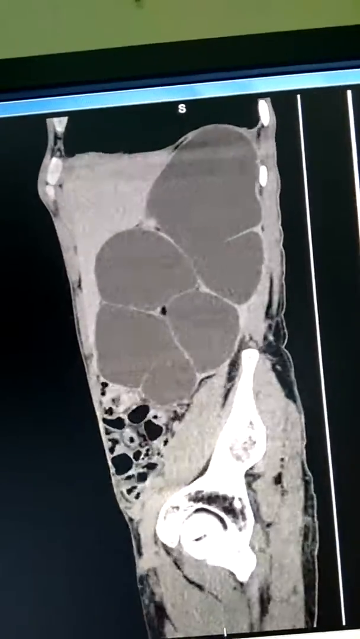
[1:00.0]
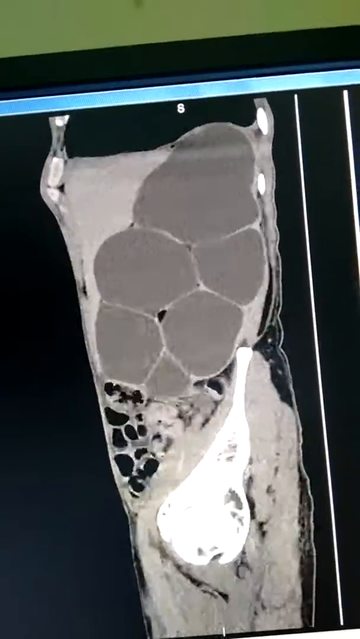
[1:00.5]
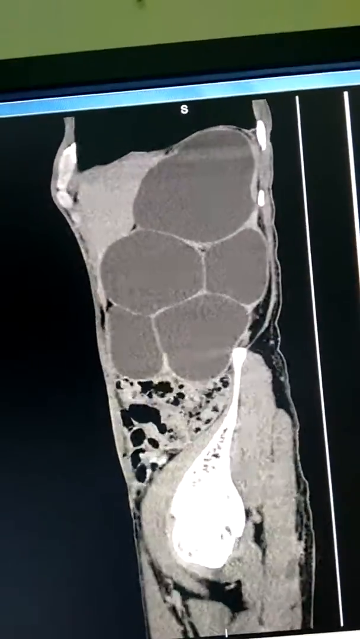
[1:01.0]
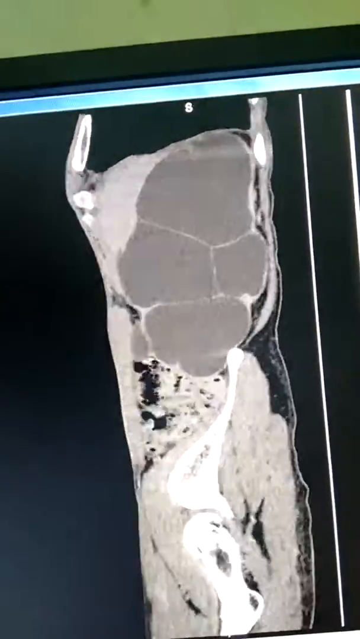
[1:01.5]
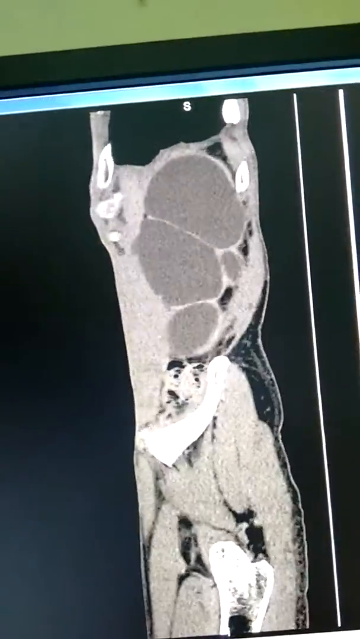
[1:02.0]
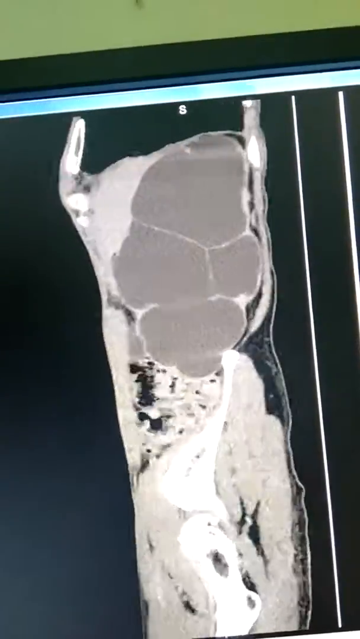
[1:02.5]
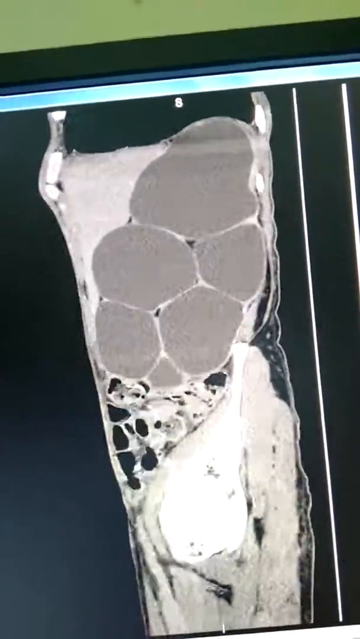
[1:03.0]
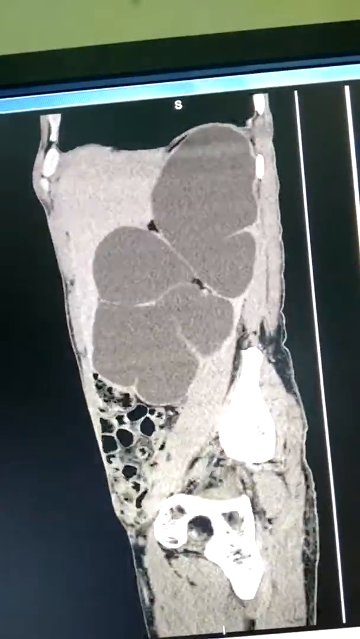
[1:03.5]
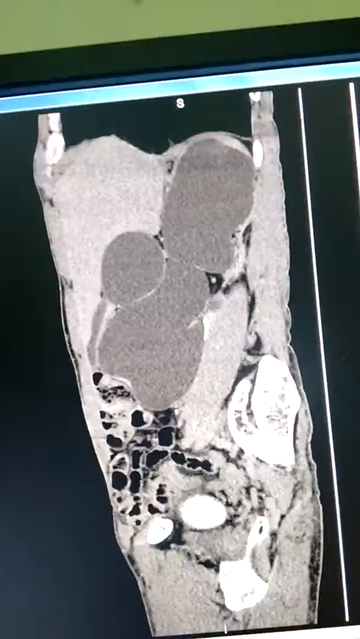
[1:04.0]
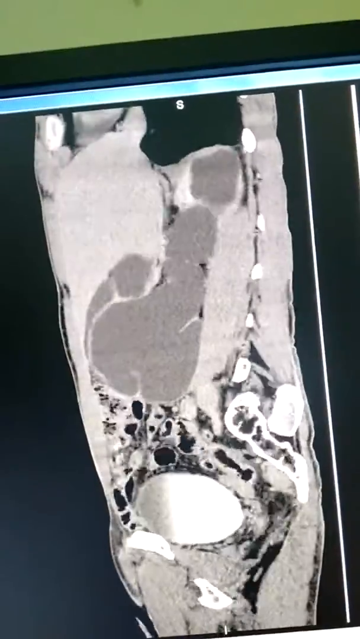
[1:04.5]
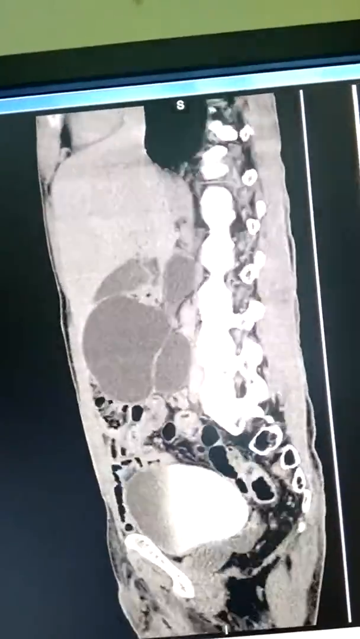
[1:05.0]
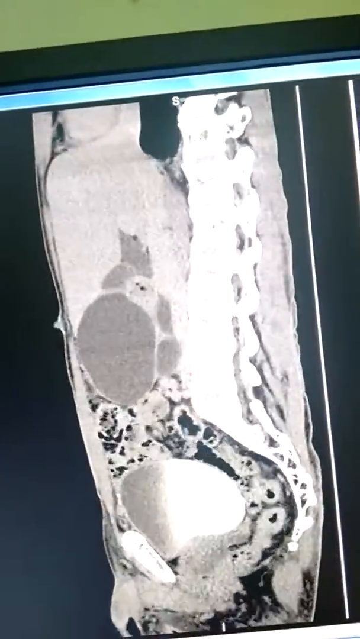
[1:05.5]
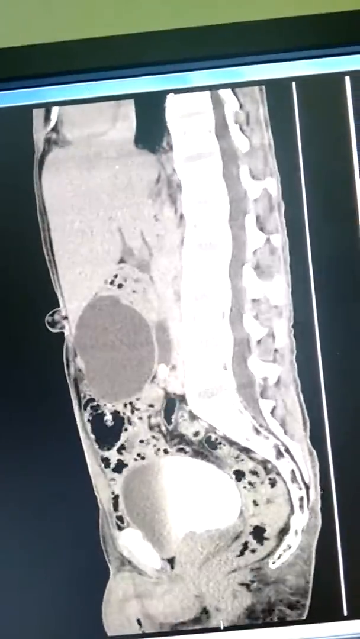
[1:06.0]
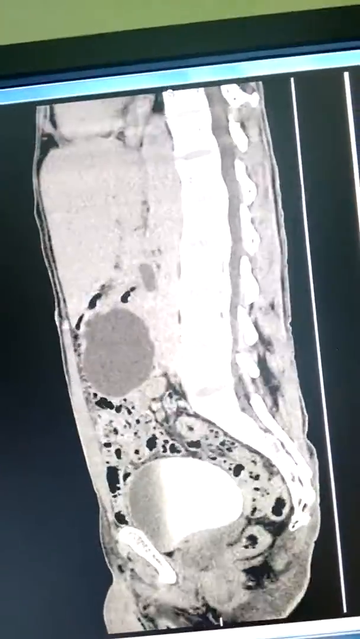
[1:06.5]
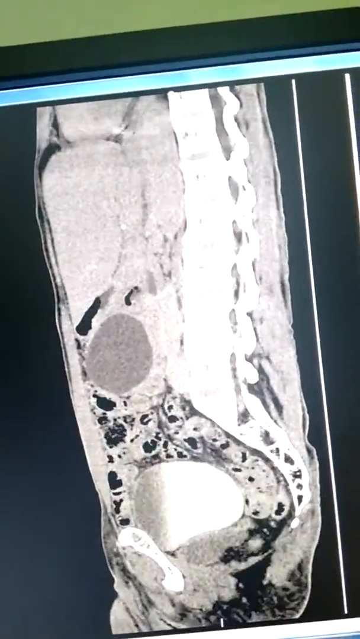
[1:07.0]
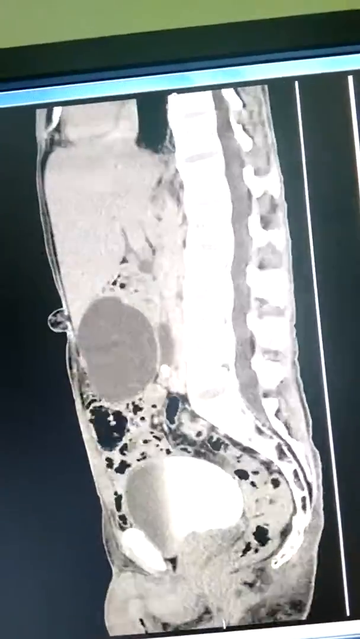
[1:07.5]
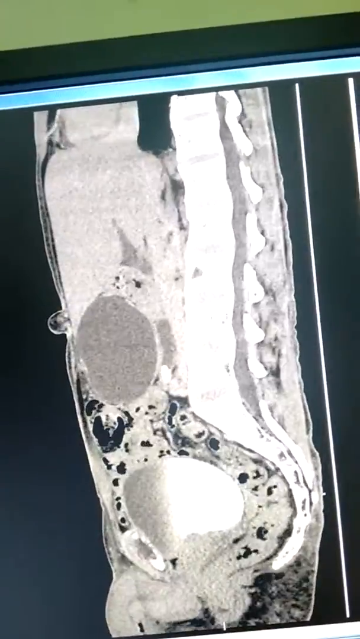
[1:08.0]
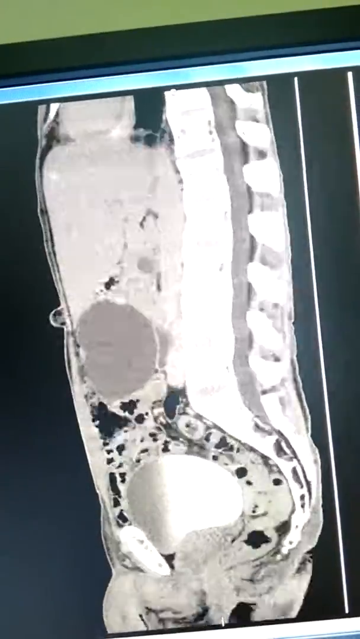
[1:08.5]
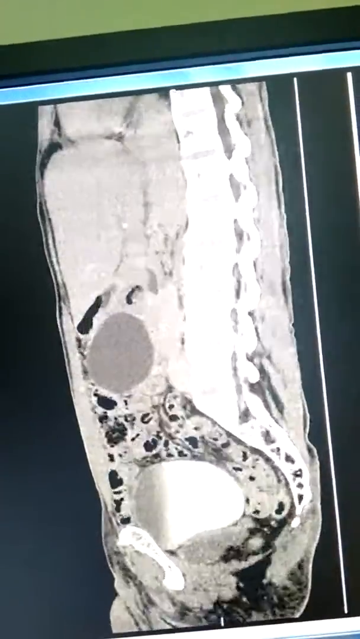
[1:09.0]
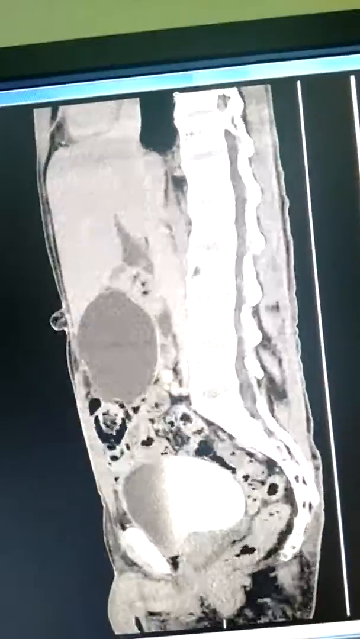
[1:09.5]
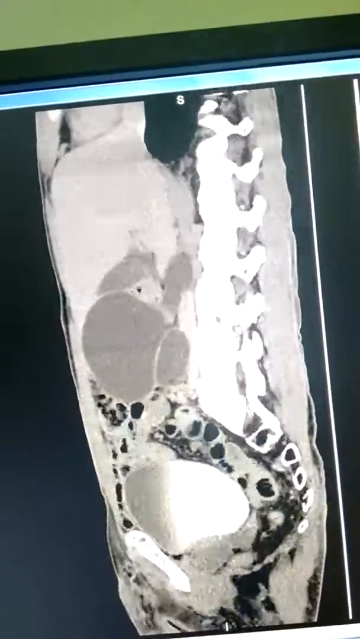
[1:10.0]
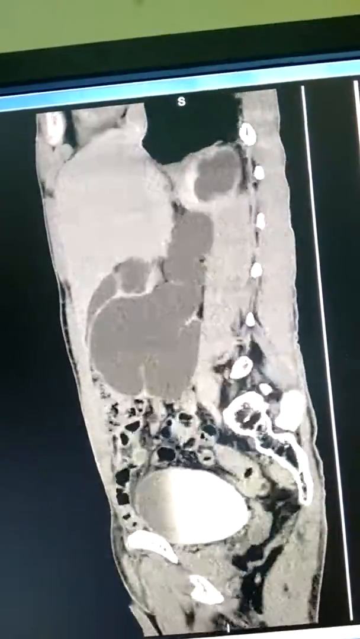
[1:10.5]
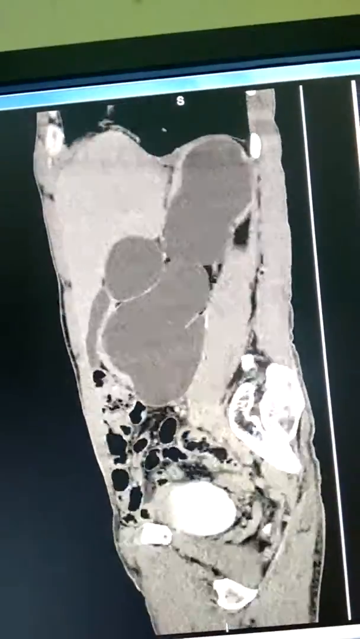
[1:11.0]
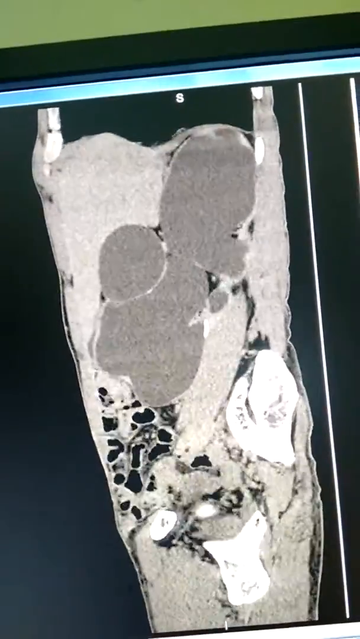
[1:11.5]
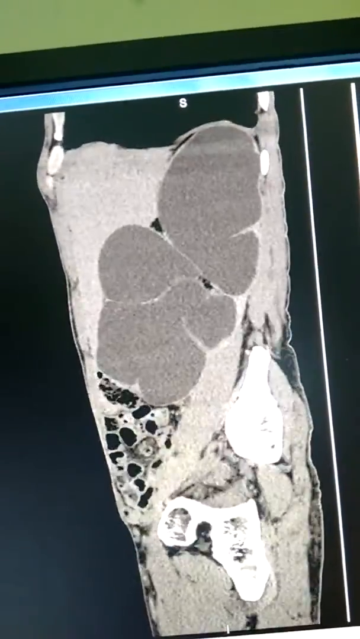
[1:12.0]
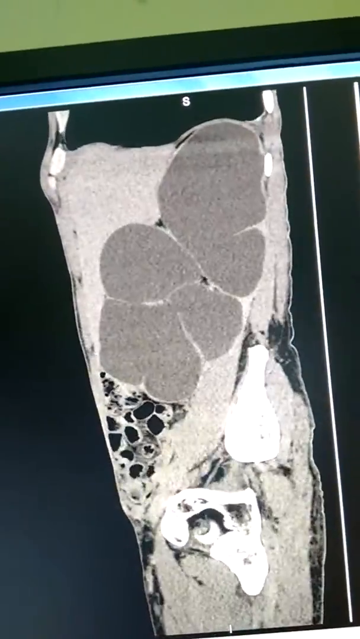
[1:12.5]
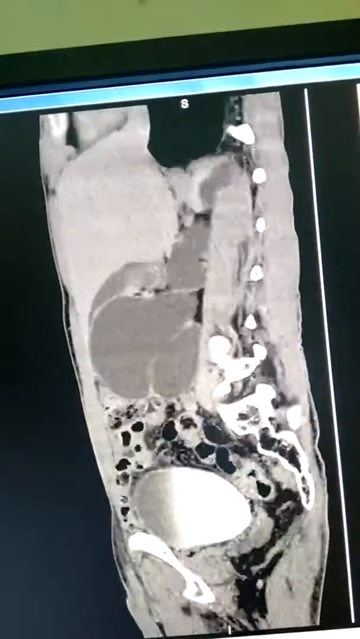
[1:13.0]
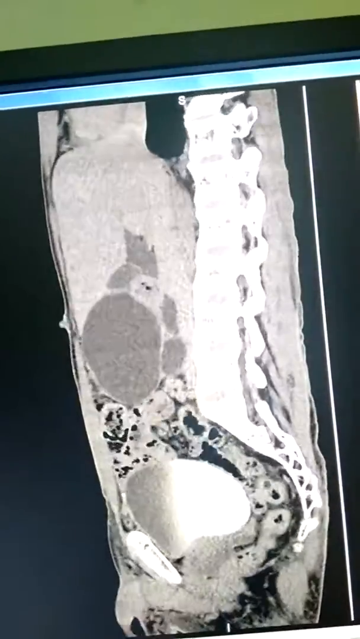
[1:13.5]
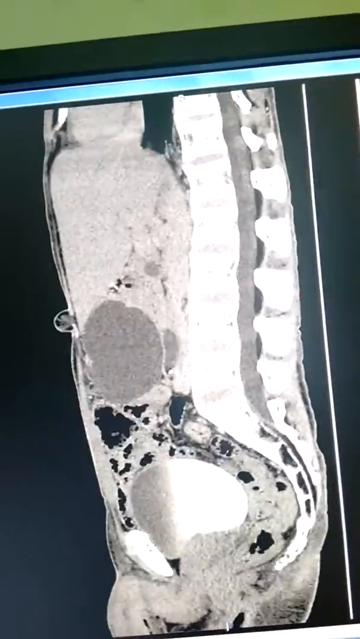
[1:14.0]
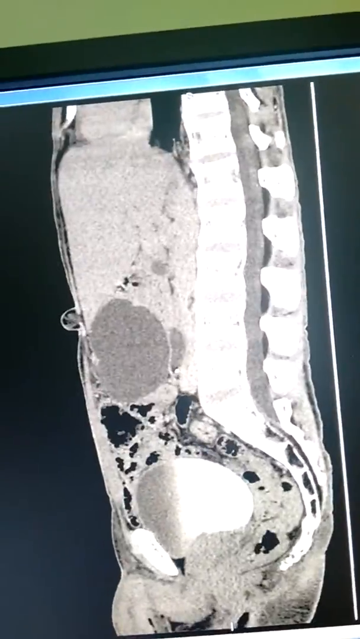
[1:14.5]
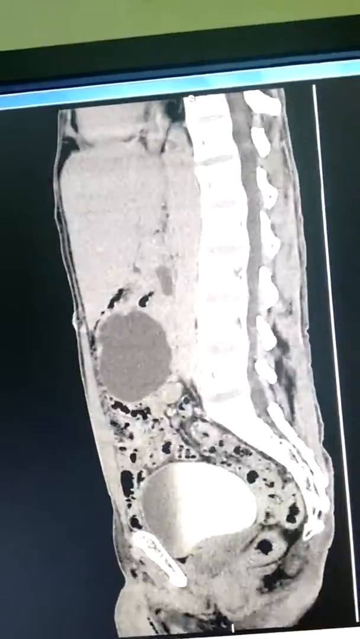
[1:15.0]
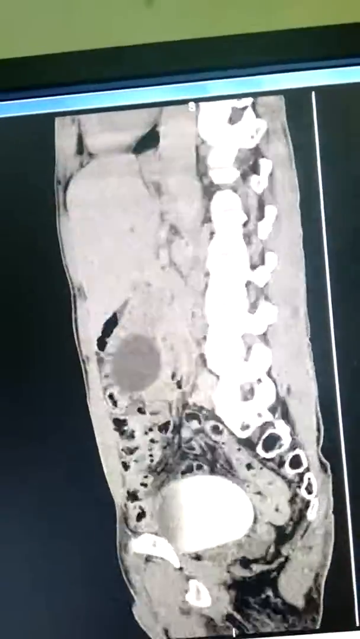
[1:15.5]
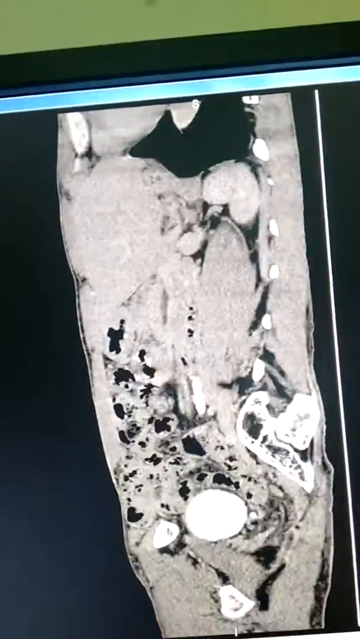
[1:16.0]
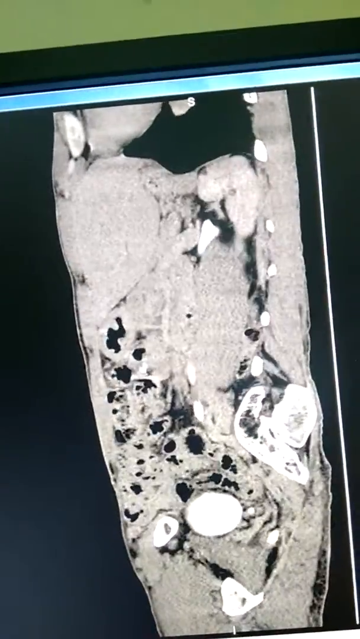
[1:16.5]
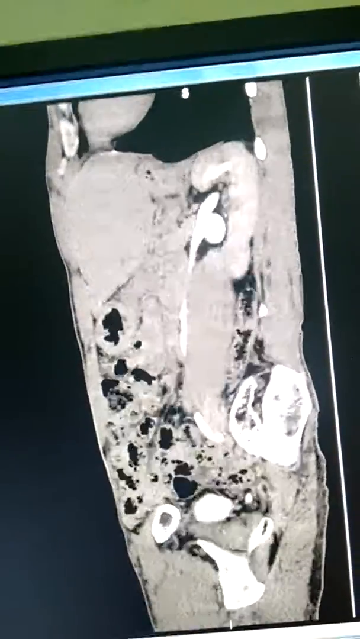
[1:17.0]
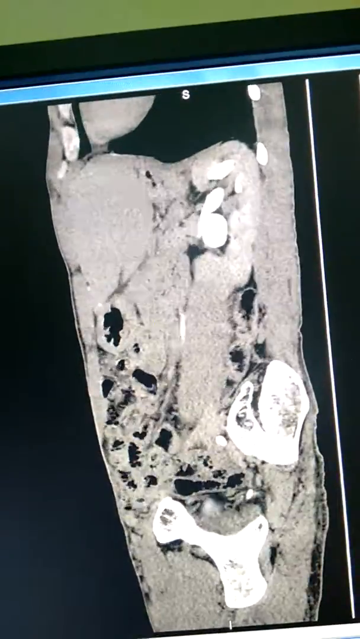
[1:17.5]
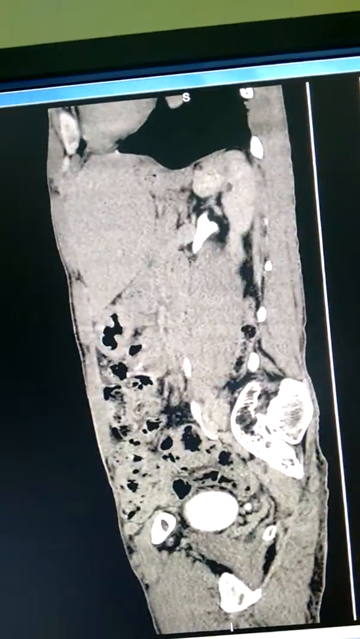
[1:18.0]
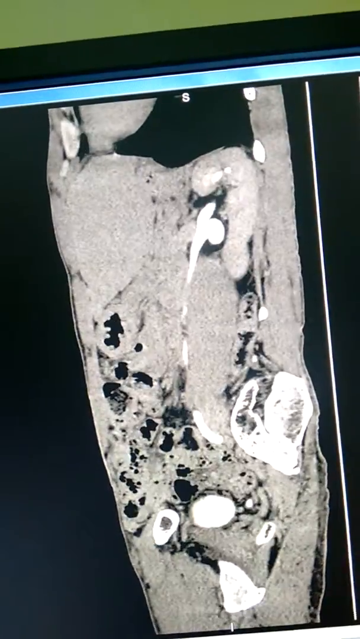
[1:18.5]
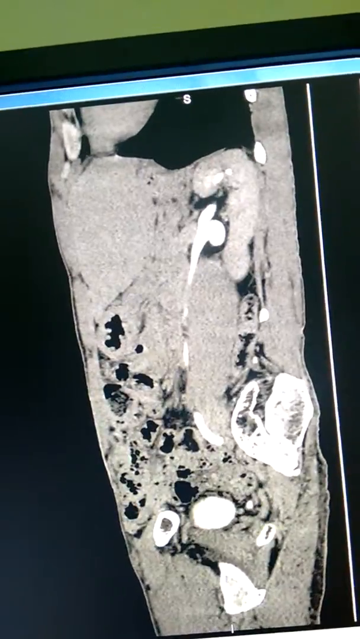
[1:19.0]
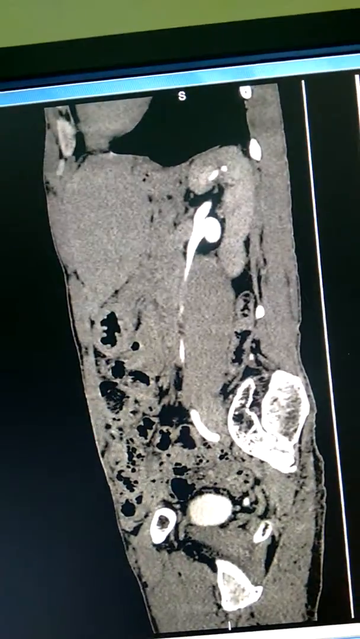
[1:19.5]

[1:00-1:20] A lateral exam of a man's abdomen appears on a black background, with the spine clearly visible and very bright. The video quality is not high, so the elements cannot be fully distinguished. It is a recording of a screen: the screen's black bar is at the top, the wall behind the screen is green, and the windows and a blue bar on top of the program's window are visible. The spine then goes away and a different formation appears, most likely a different depth where the spine is no longer visible, probably showing other organs and muscle tissue. The overall shape slightly changes from thicker to thinner.